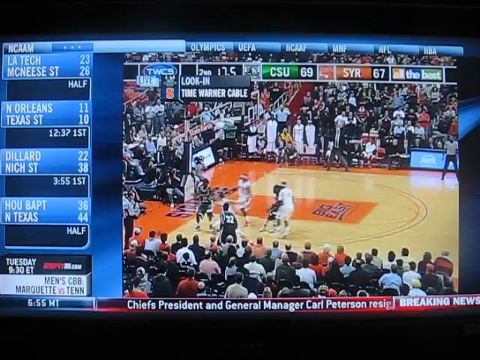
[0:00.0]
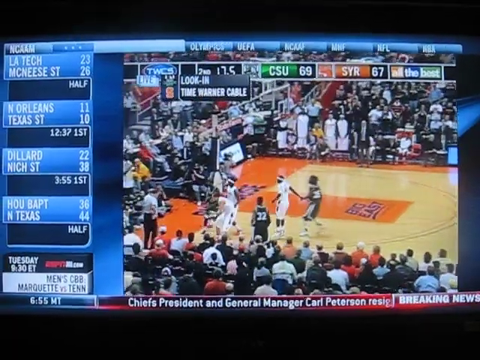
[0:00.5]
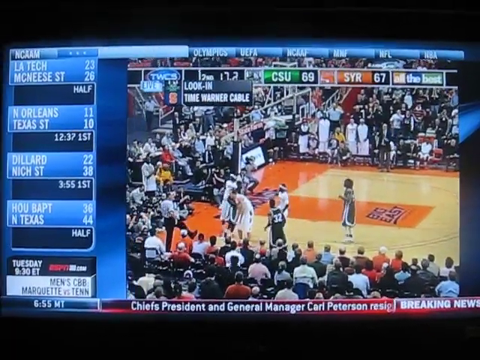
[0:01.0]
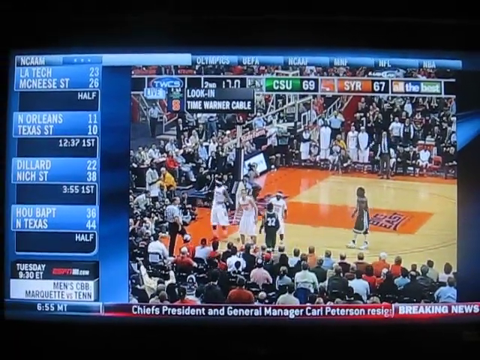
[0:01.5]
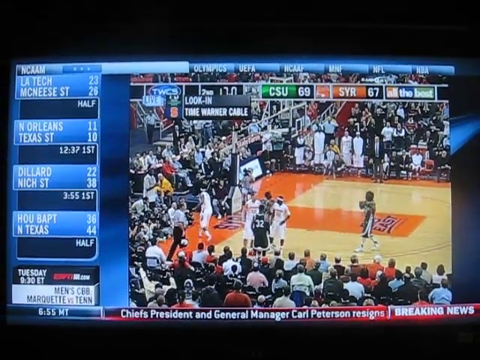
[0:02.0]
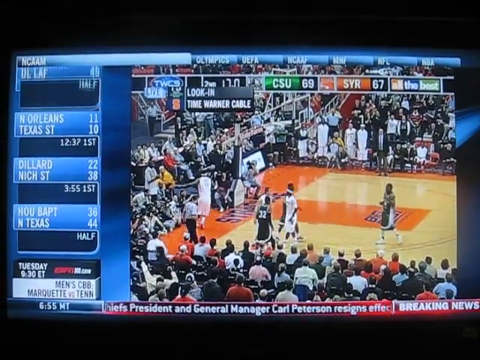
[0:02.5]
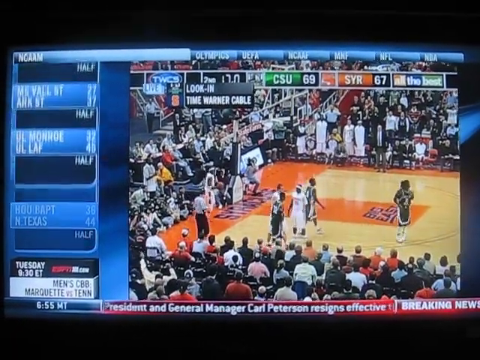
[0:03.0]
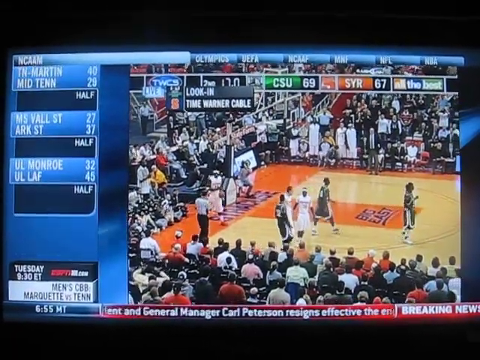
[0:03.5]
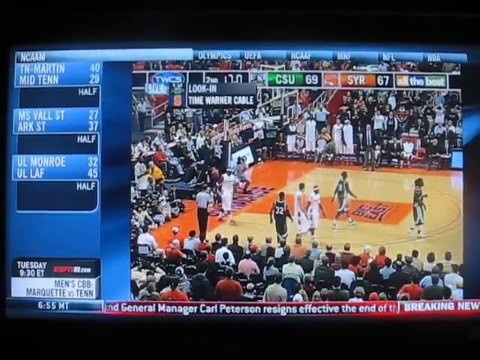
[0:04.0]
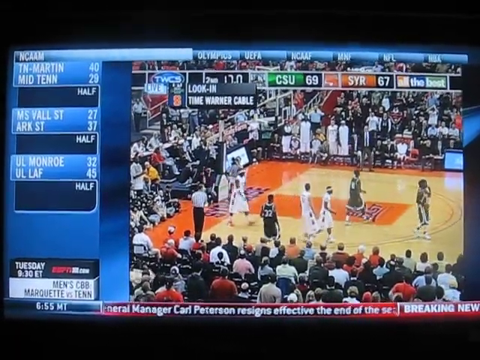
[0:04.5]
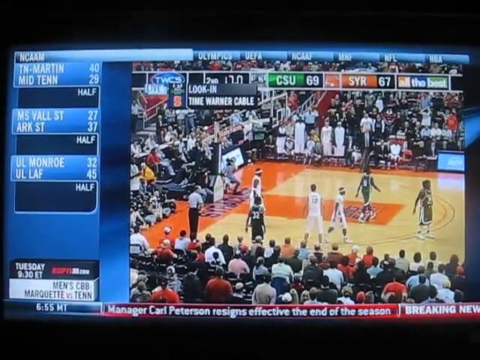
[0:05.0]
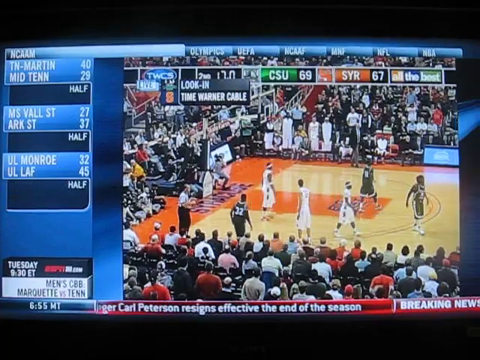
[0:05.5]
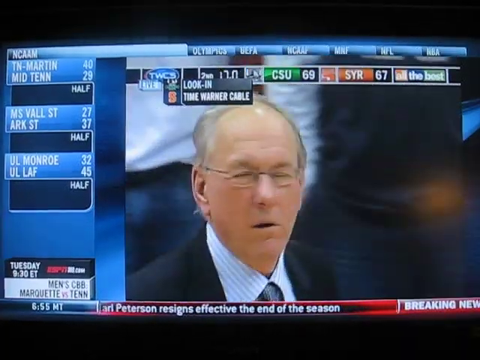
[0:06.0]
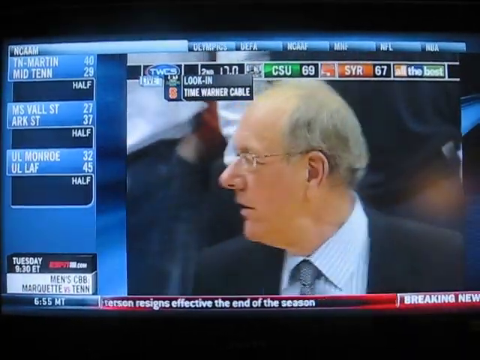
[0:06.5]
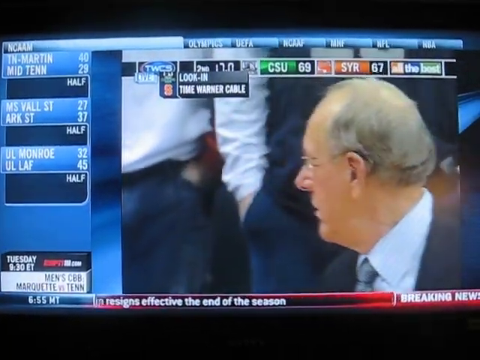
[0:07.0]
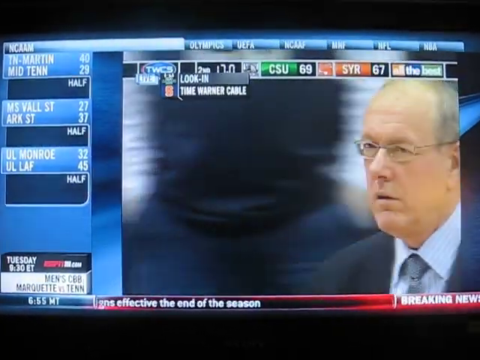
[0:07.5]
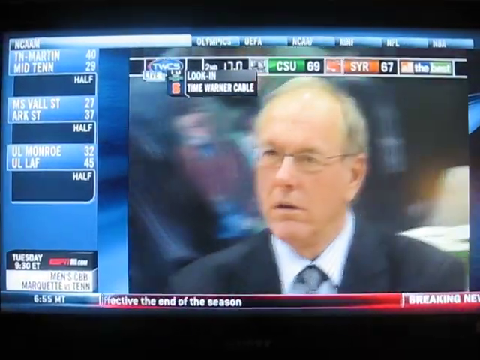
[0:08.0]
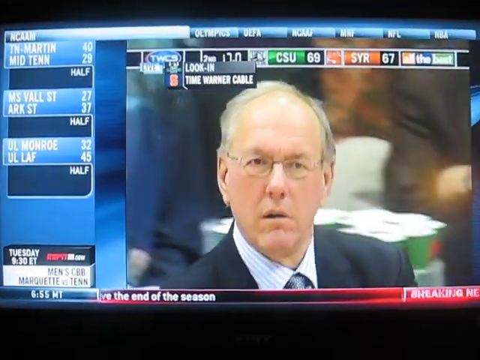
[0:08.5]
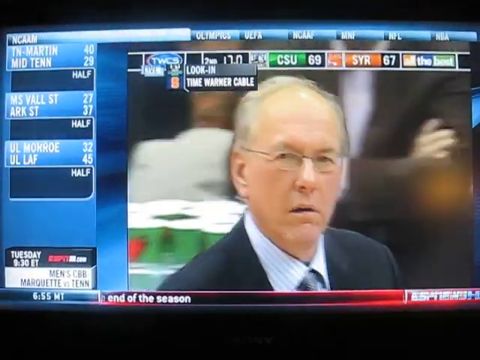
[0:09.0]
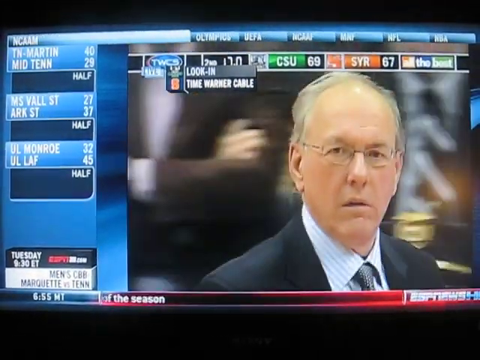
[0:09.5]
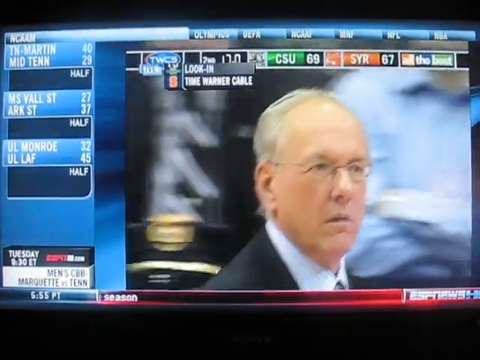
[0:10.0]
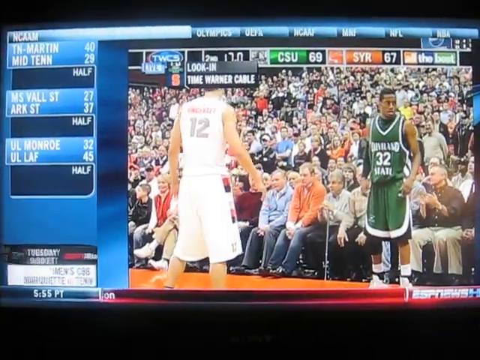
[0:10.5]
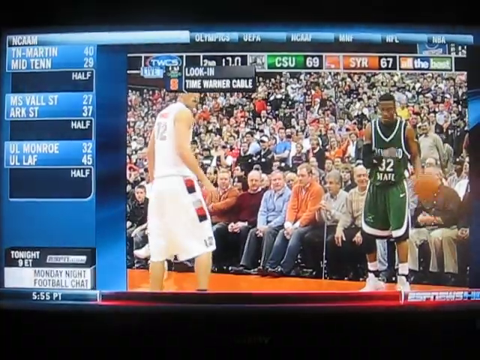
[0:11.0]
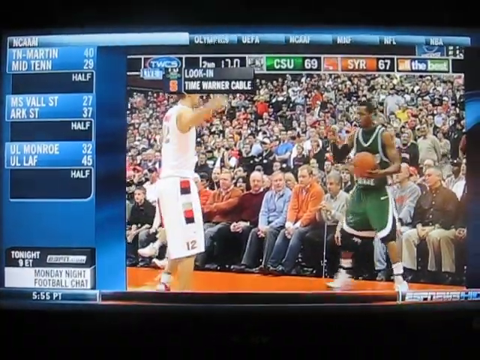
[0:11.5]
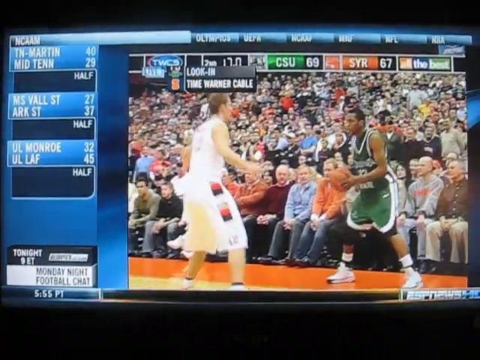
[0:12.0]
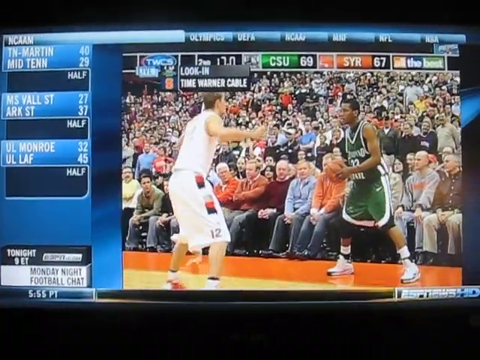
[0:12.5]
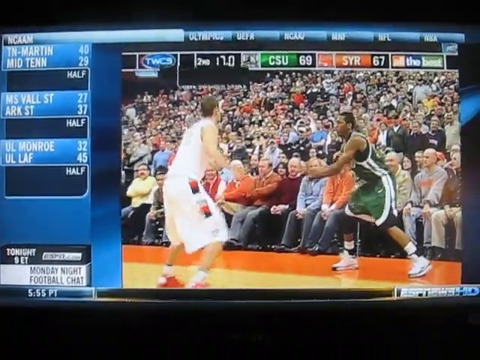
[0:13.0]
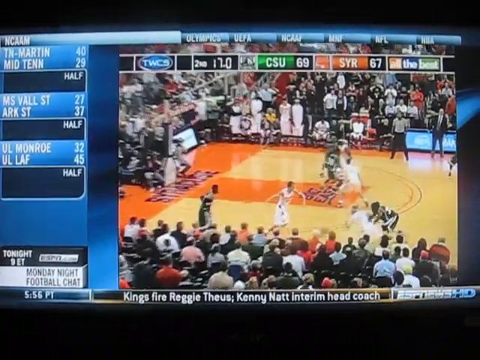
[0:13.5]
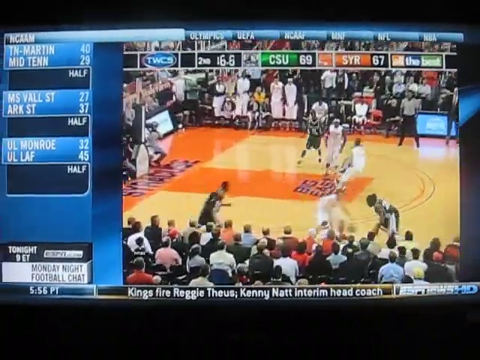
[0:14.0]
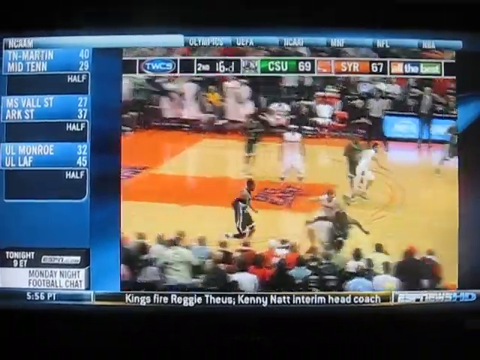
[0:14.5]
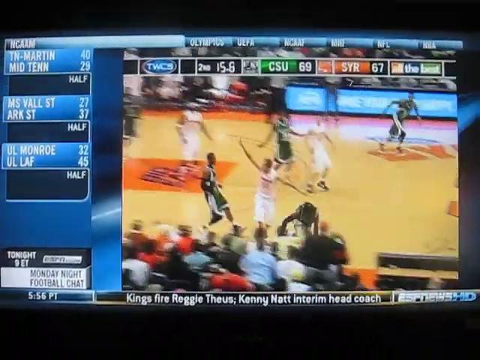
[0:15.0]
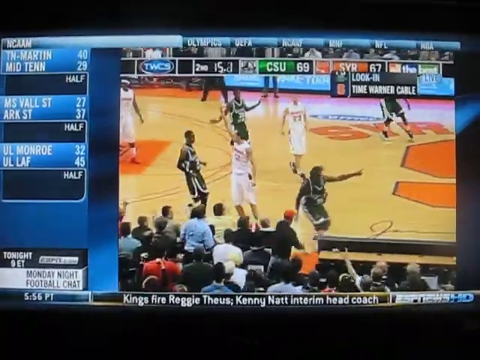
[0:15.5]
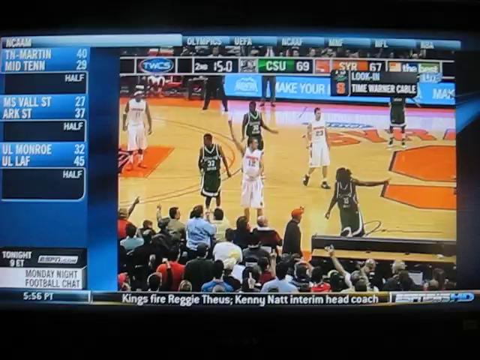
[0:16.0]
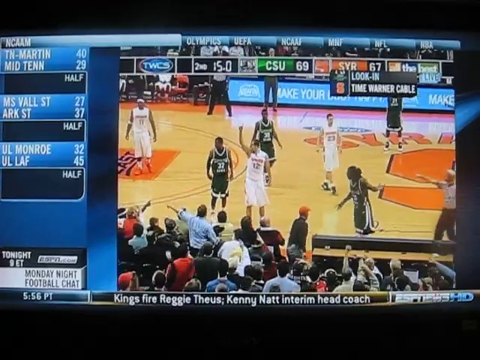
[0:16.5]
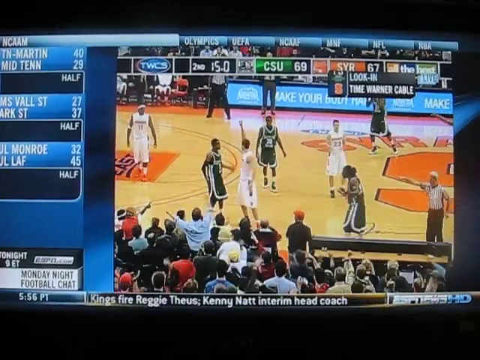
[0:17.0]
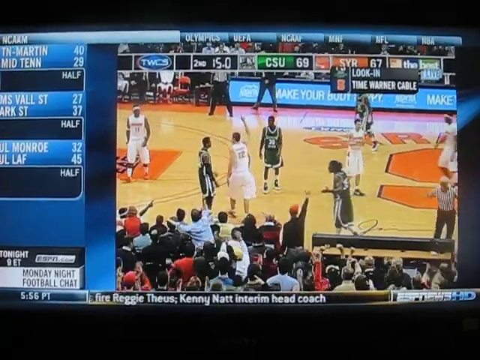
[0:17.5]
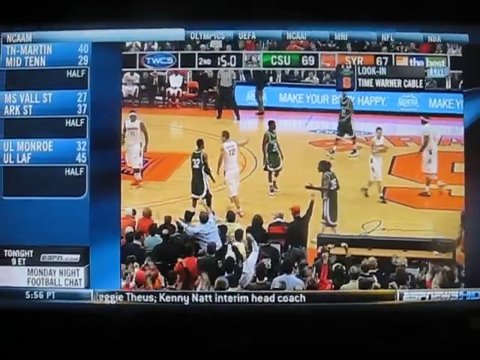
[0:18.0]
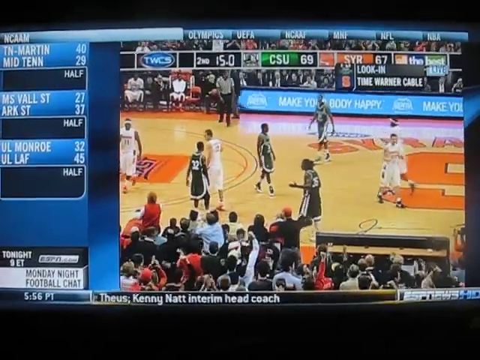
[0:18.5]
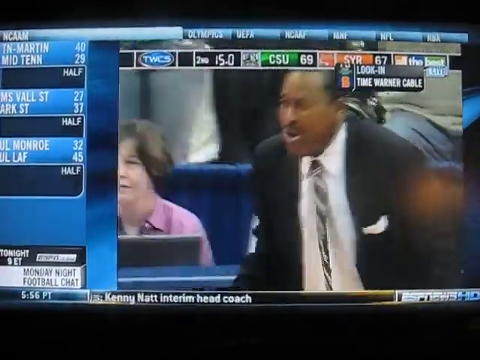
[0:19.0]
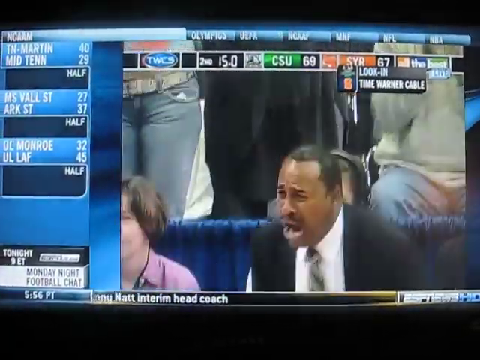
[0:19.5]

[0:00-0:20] A screen shows NCAA scores listing LA Tech and McNeese, New Orleans, Texas, Dillard, Niche, Houston Baptist and North Texas, with the time at 6.55 Mountain Time. The crawler below reads "Chiefs President and General Manager Carl Peterson resigns" as breaking news. The main part of the screen shows a basketball game between players in green jerseys and players in white jerseys, with CSU at 69 points and Syracuse at 67. After the ball goes out of bounds, a player in a white jersey throws it to the referee. The shot cuts to a white man in a suit who turns his head to look down at the game. A player in a green jersey fakes a throw, then passes the ball to another player in green, who gets fouled. The audience is in full participation, waving their arms. The player in green points, and people in the front row raise their arms to point. On the sidelines, a Black man in a black suit and tie is up and upset, banging his arms against the sides of his body.